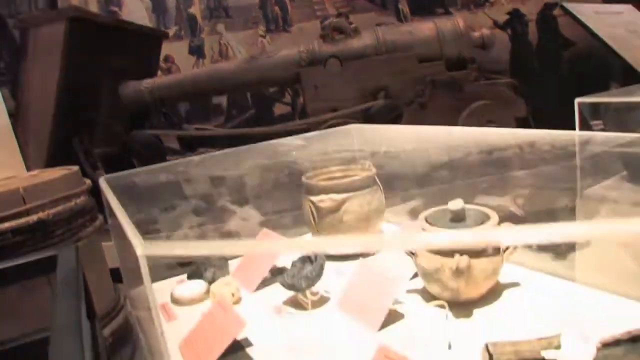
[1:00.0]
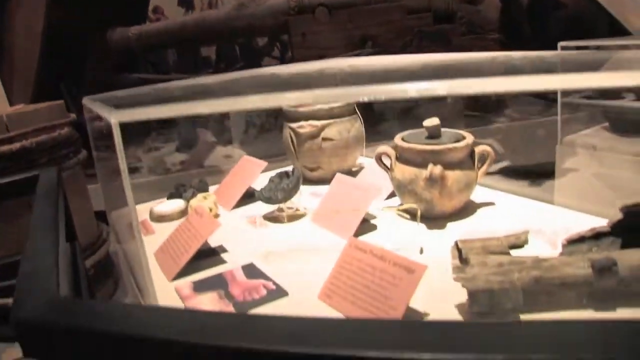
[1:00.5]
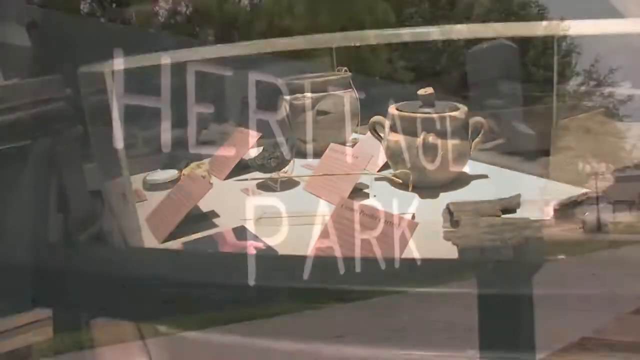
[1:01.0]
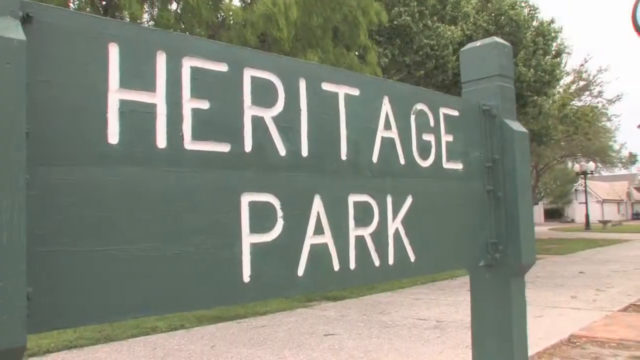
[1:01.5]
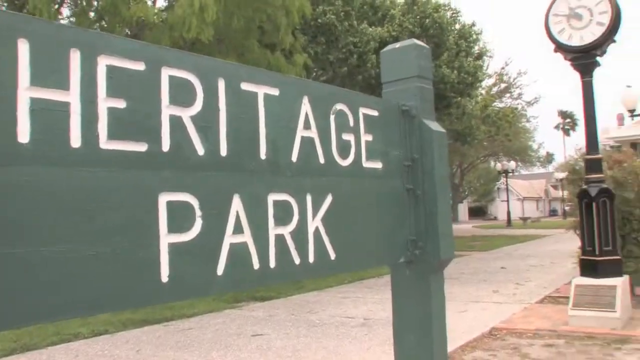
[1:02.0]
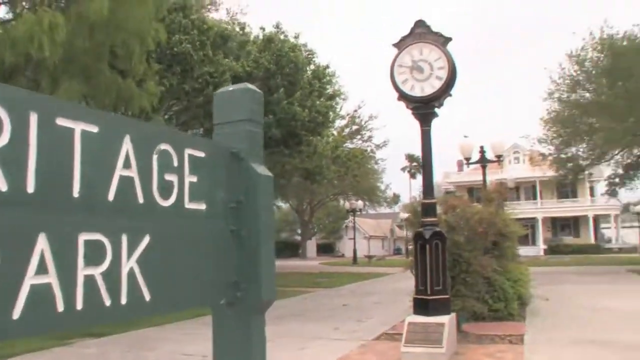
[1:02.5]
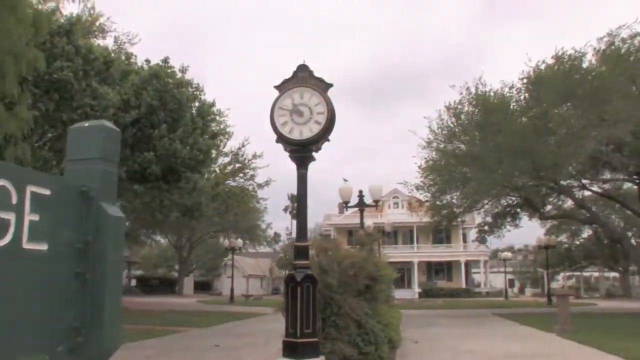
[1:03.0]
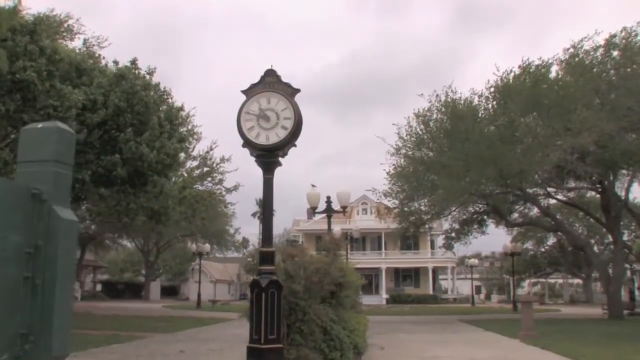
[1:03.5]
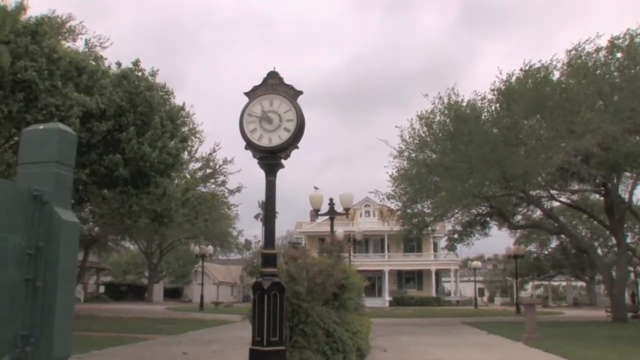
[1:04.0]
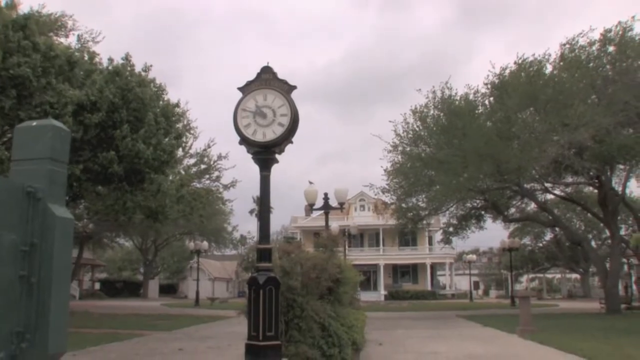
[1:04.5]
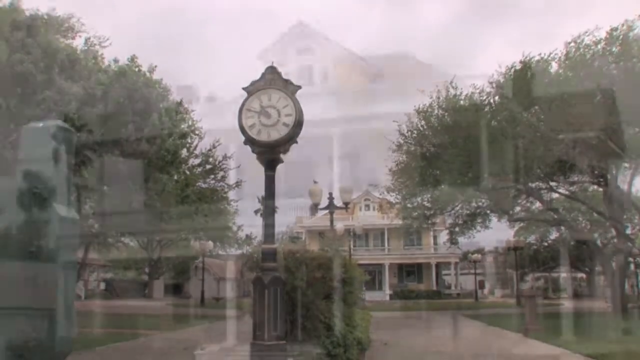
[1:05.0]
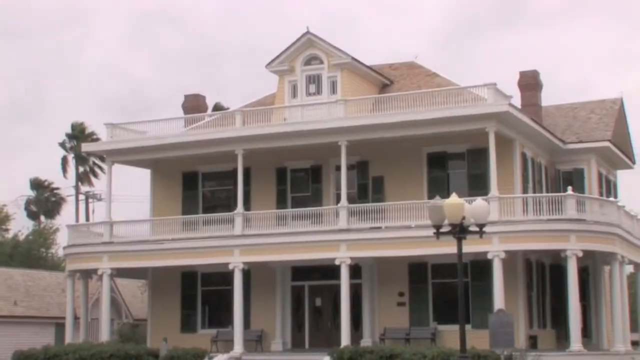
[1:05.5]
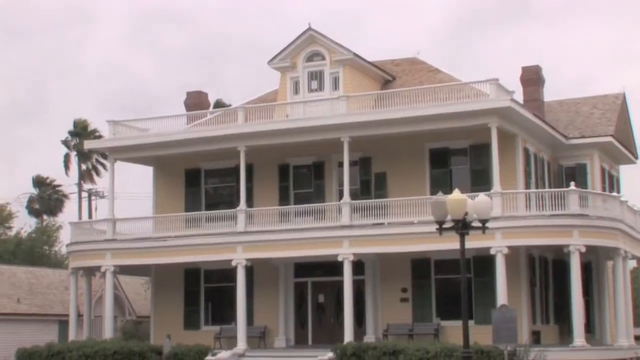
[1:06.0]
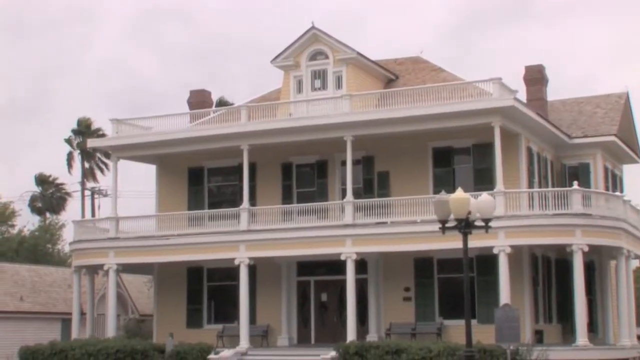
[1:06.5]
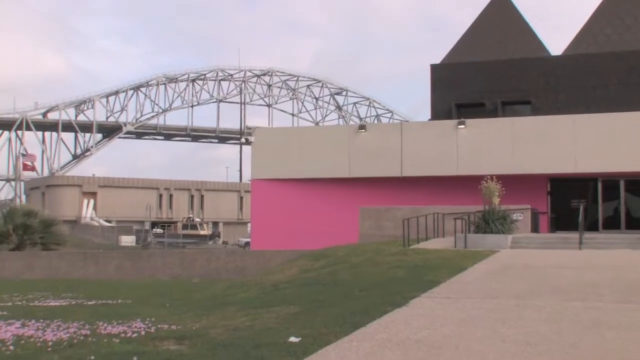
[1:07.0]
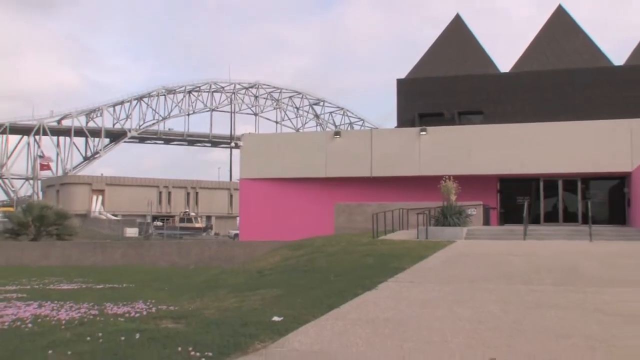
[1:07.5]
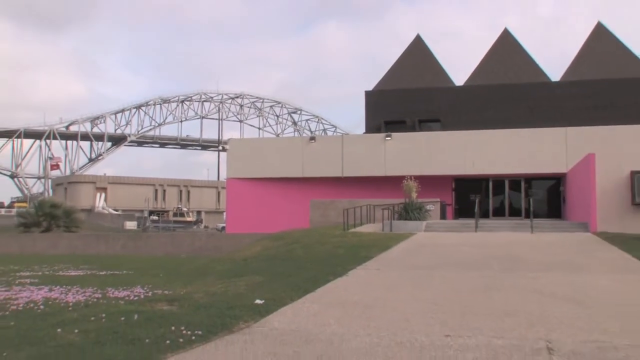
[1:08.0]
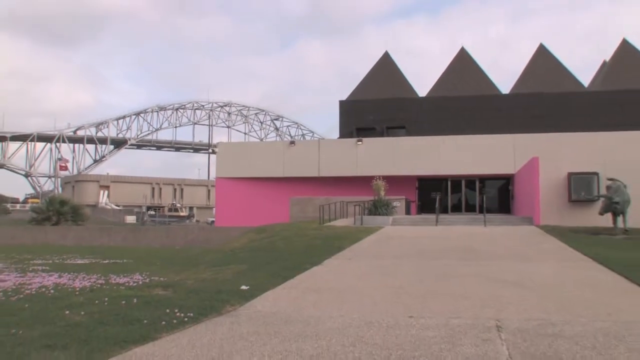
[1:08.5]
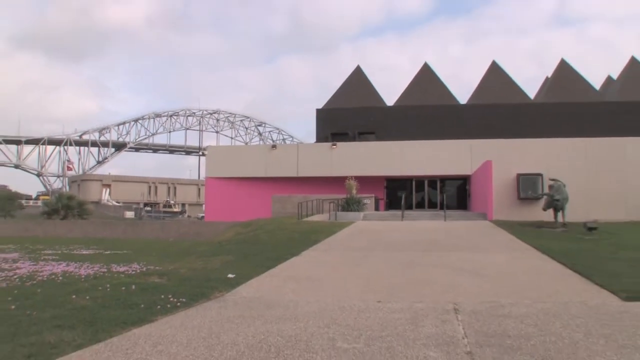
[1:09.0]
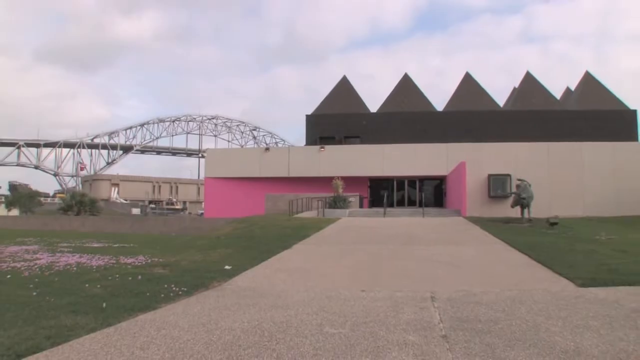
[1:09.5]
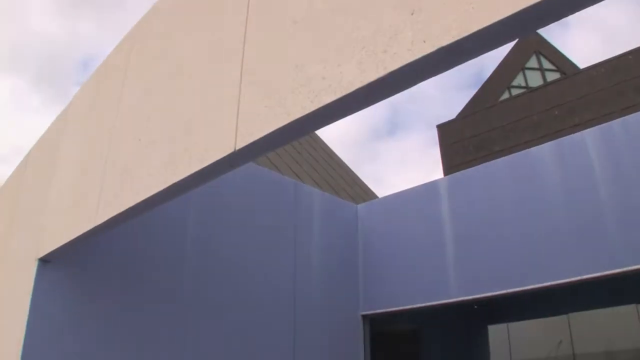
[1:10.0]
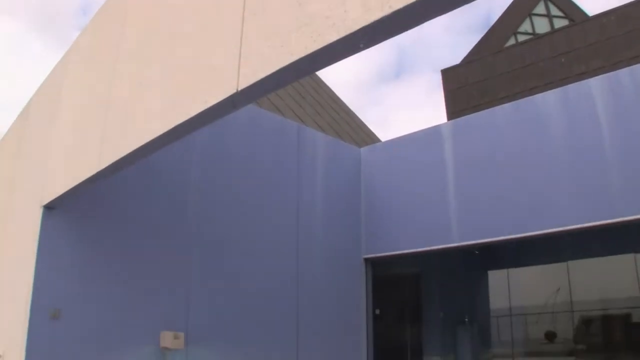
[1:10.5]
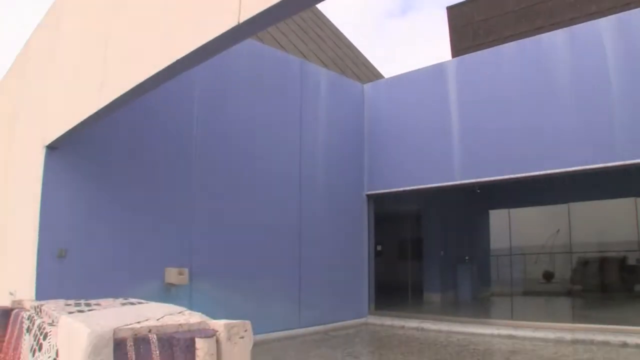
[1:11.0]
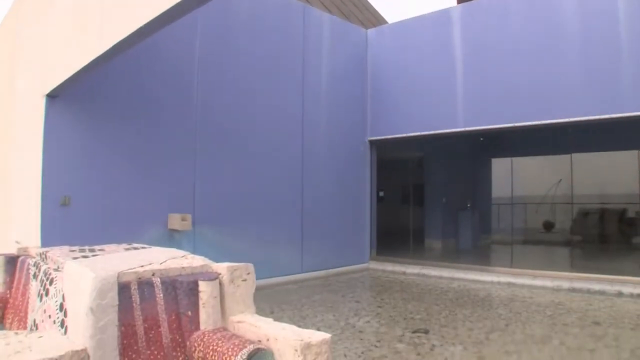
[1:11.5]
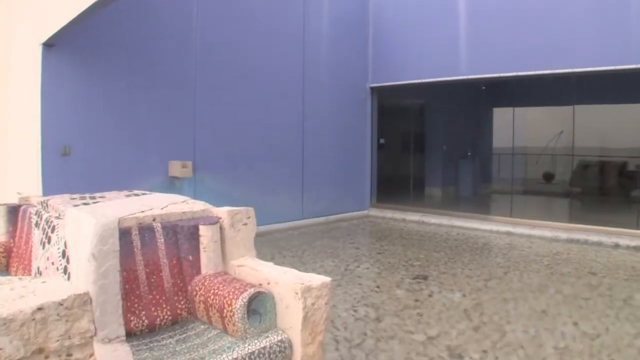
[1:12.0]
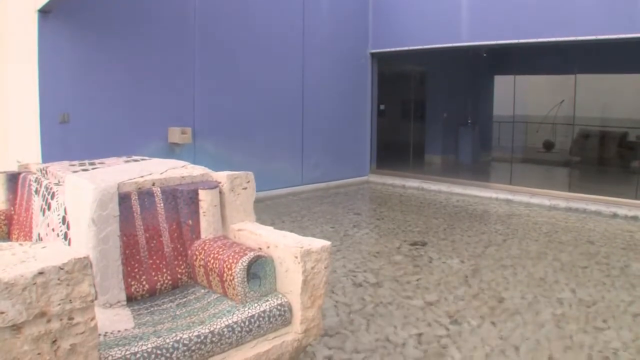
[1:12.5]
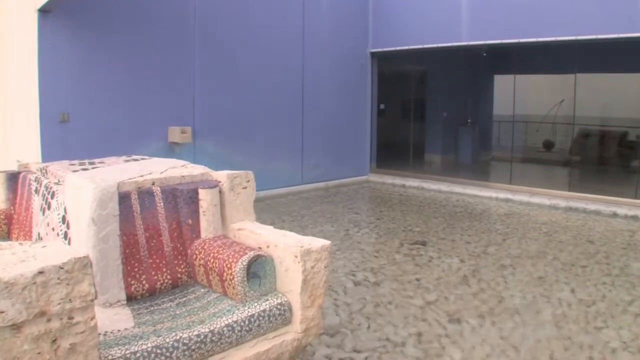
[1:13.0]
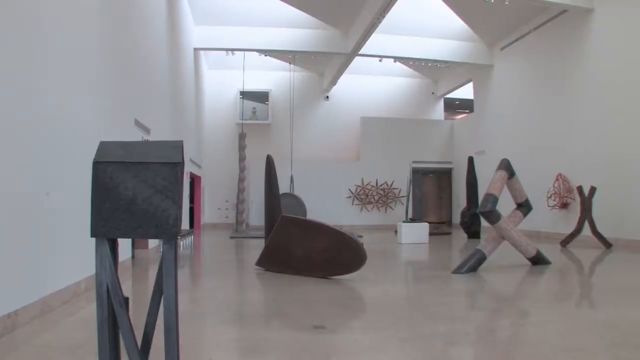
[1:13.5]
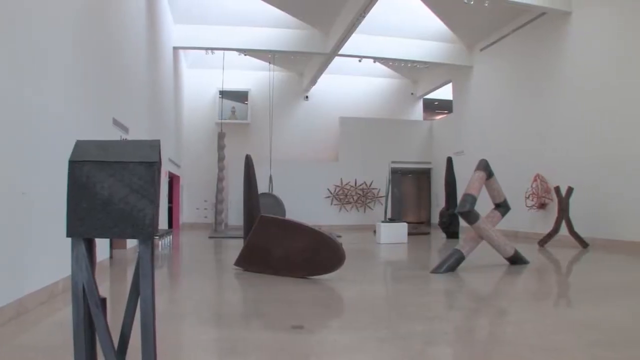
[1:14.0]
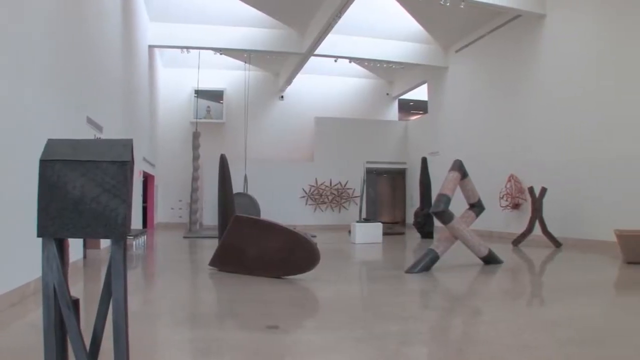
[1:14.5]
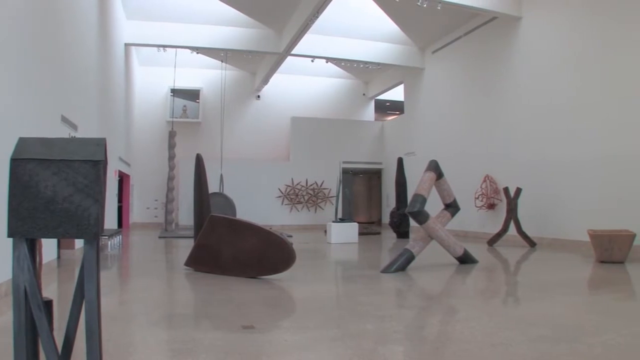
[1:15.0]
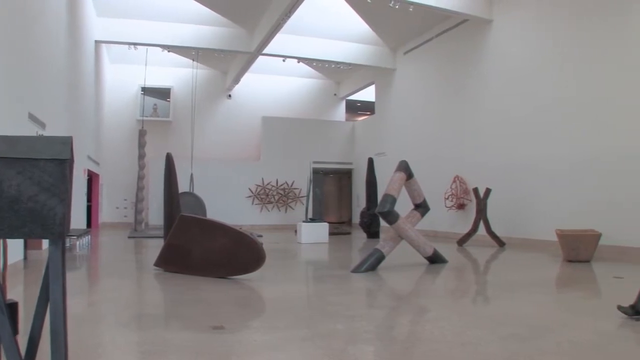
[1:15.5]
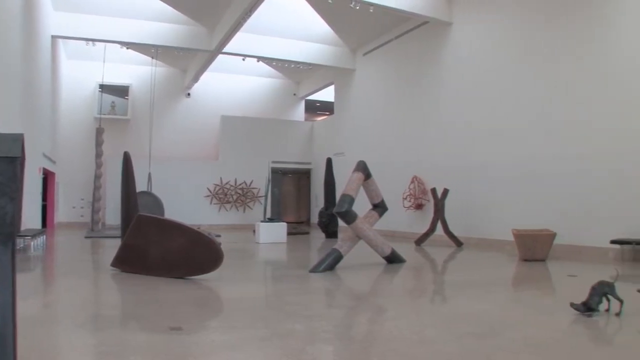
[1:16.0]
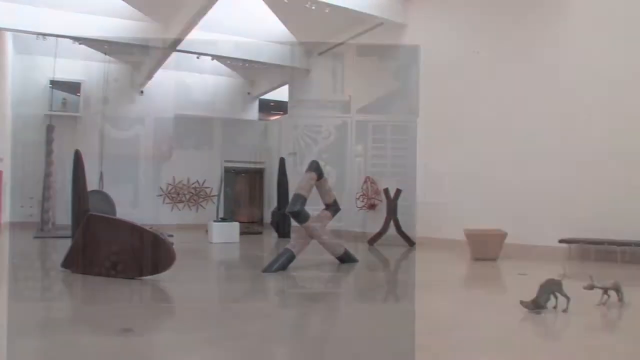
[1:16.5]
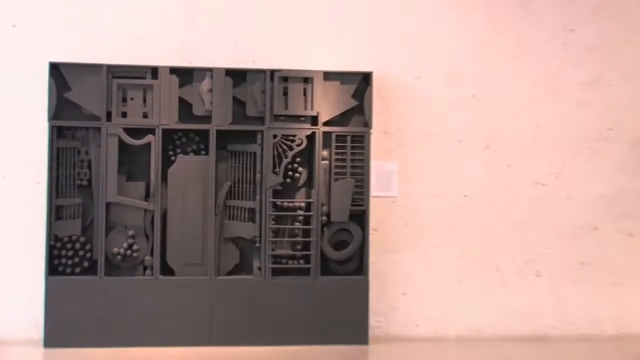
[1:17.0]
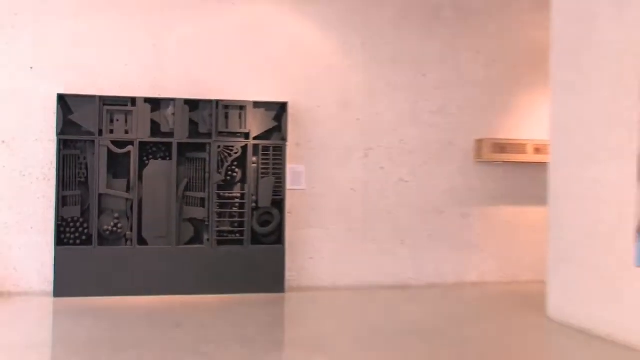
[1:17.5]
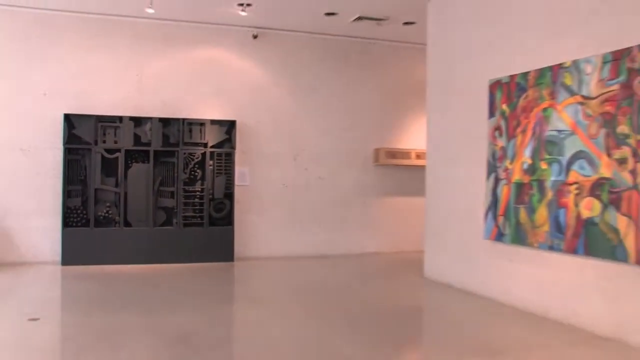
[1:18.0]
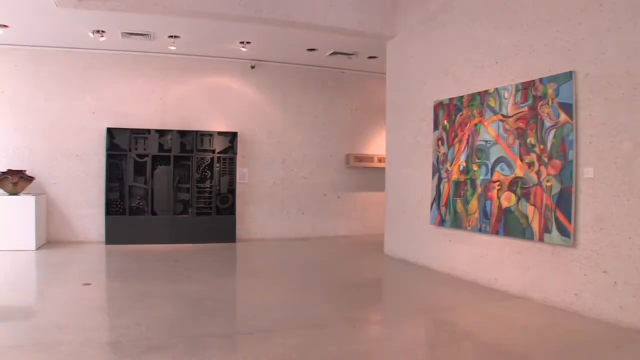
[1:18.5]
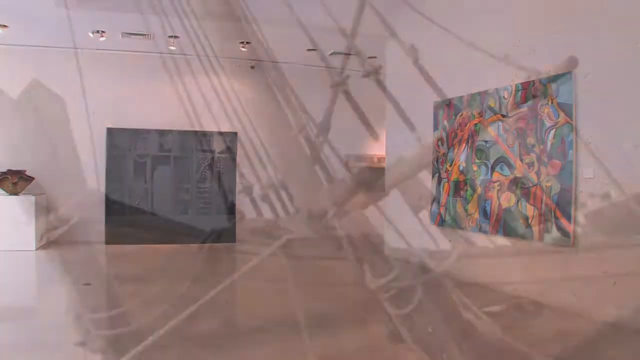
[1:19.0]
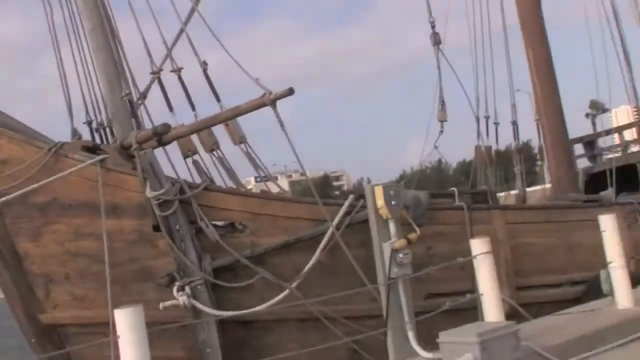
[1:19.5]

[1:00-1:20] What looks like an exhibit in the museum is shown: at the top of the screen in the background is an old ship's cannon pointing toward the left side of the screen, and at the bottom in the foreground is a glass case containing what appear to be ceramic vases and other items. The scene switches to a billboard with a screen on it reading "Heritage Park" in white letters, with a clock to its right and buildings in the background. Next is a three-story house: one window on the top story, three windows on the second story, and two windows with a door in the middle on the bottom story, with palm trees on the left side. Then a bridge goes behind a pink building. Another building has blue walls; the camera pans down to a chair that looks like it is carved out of limestone or coral. Next is the inside of a building with some art exhibits, followed by the inside of a building with a painting on the wall on the right that sort of looks like graffiti. Finally, an old ship is parked out in the ocean.